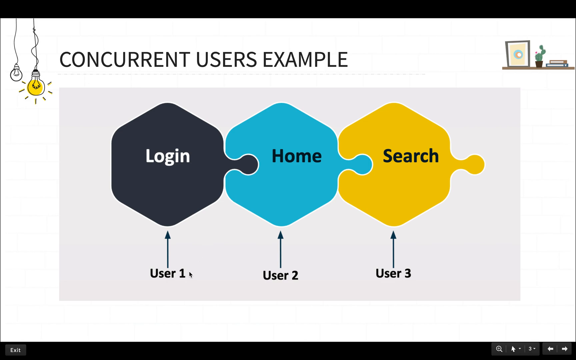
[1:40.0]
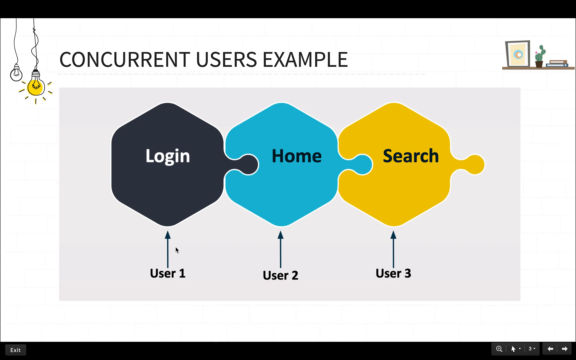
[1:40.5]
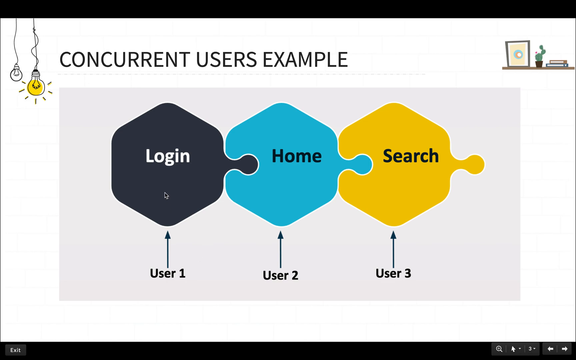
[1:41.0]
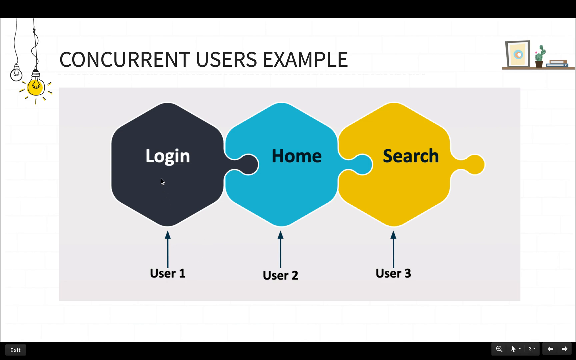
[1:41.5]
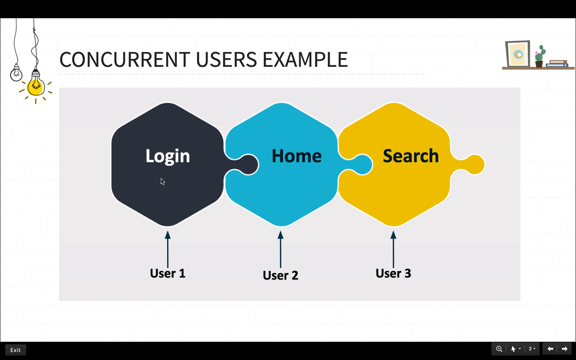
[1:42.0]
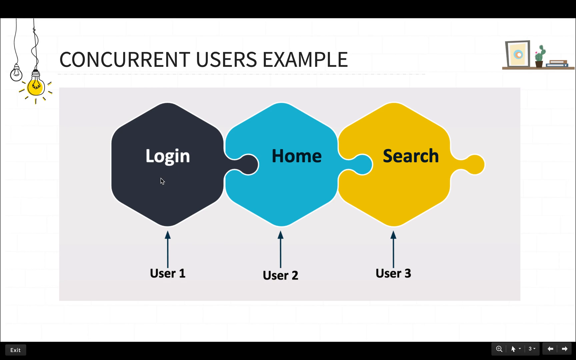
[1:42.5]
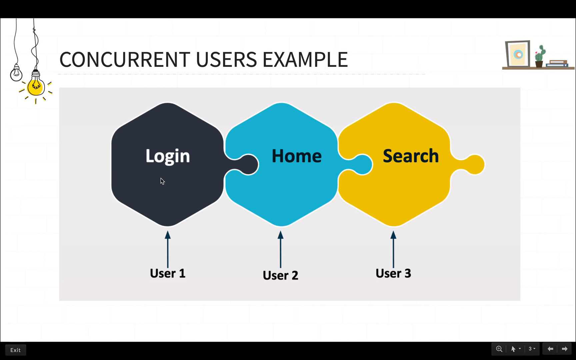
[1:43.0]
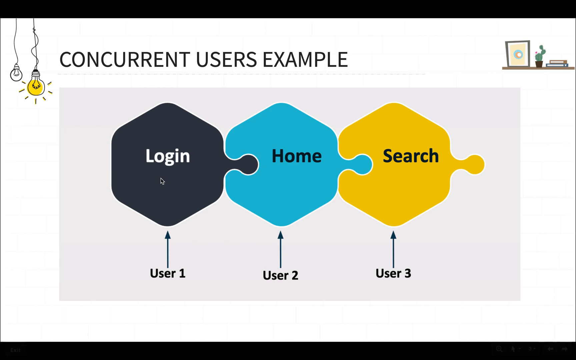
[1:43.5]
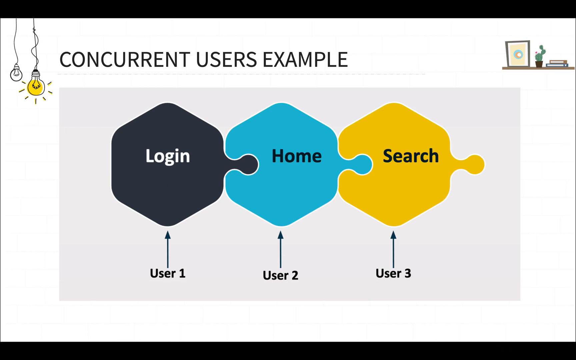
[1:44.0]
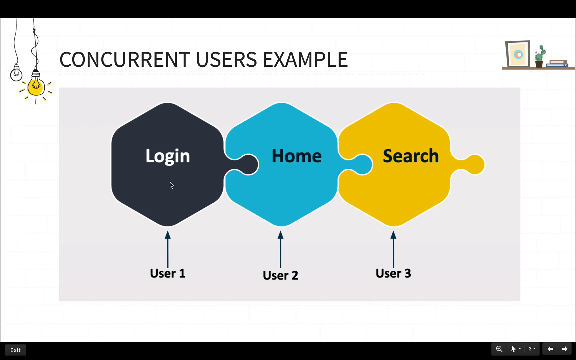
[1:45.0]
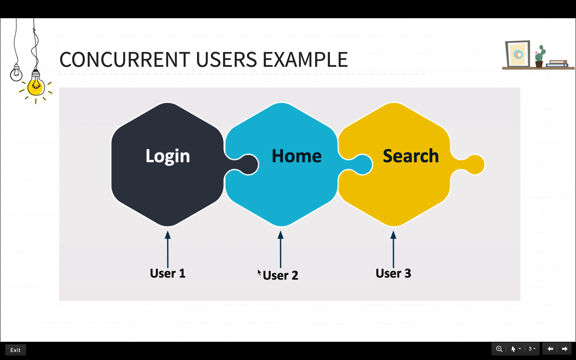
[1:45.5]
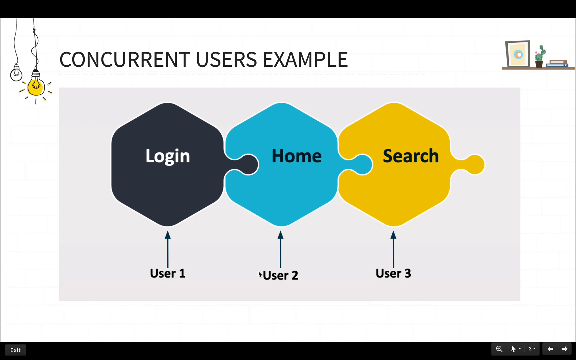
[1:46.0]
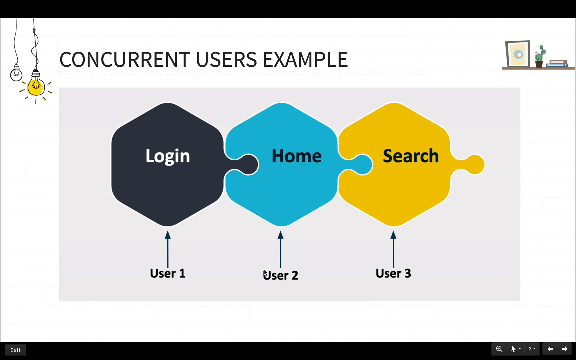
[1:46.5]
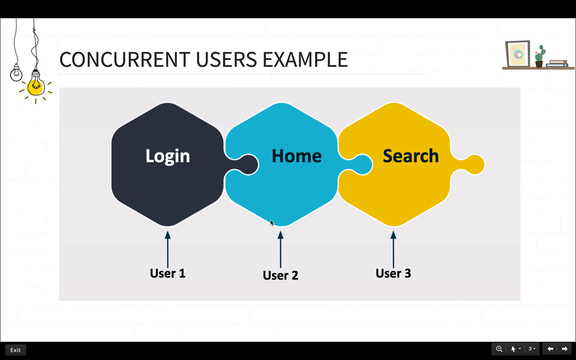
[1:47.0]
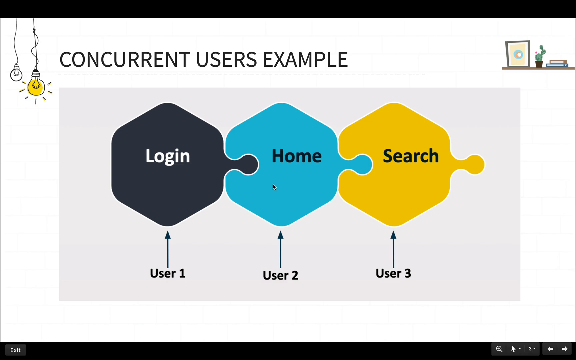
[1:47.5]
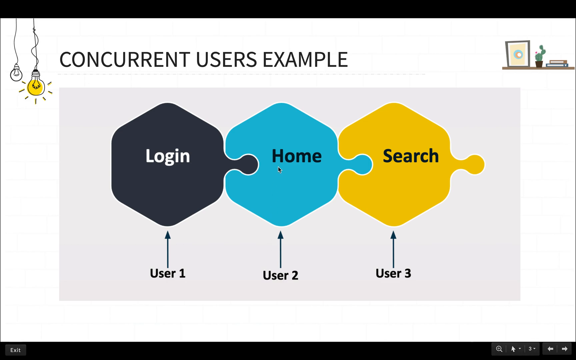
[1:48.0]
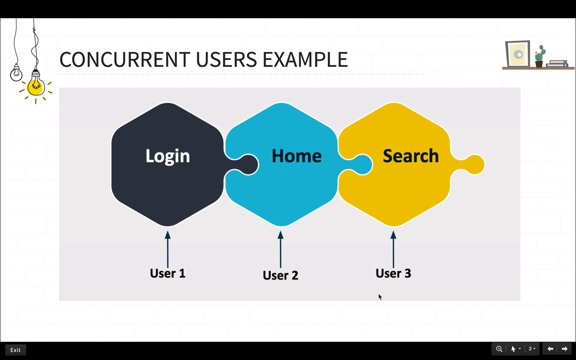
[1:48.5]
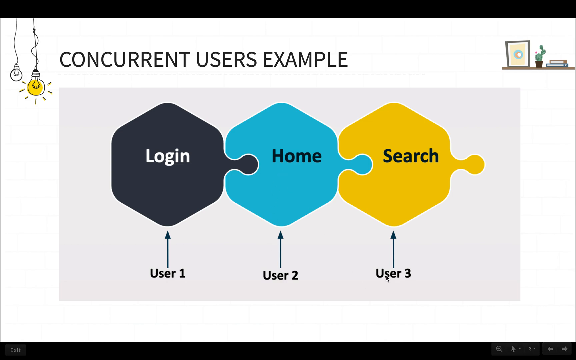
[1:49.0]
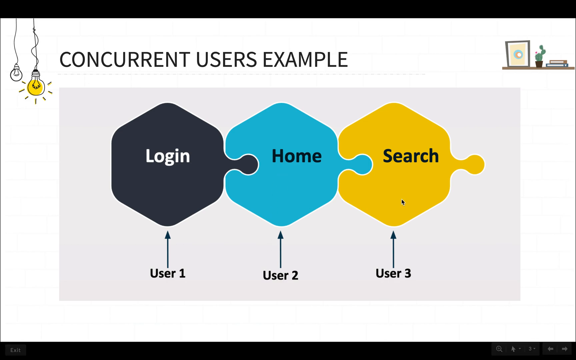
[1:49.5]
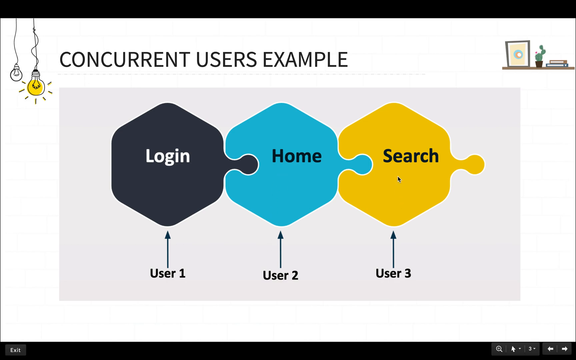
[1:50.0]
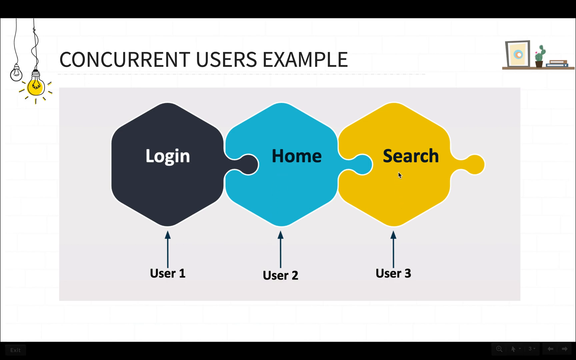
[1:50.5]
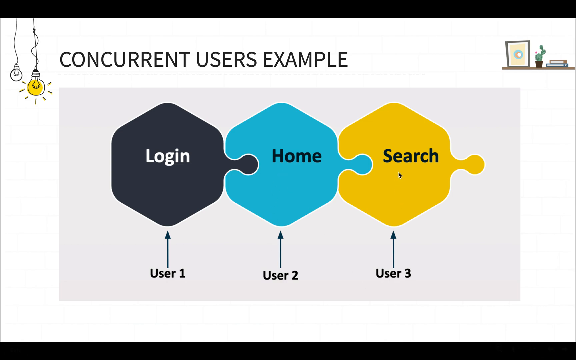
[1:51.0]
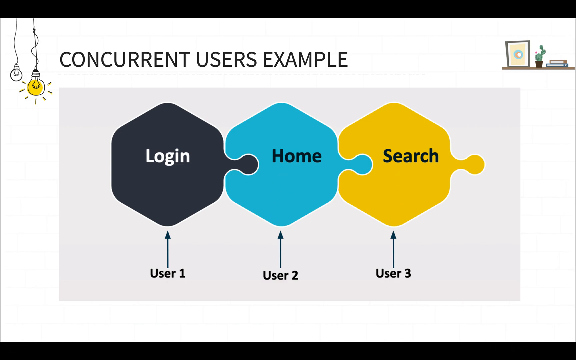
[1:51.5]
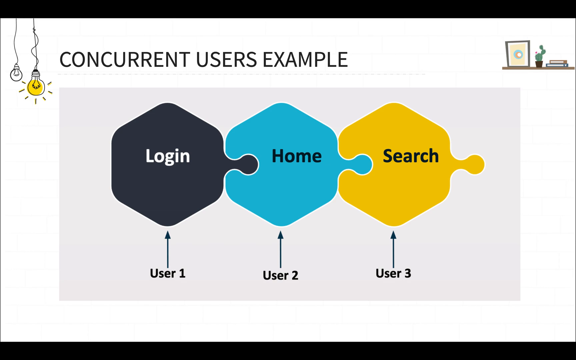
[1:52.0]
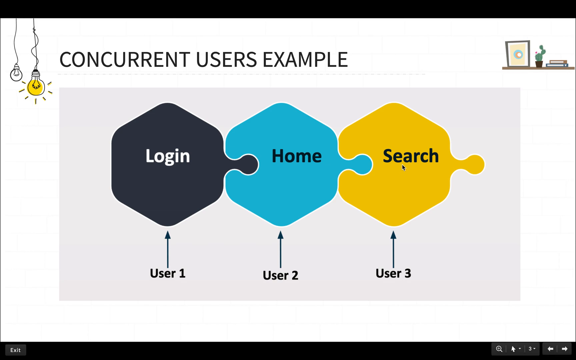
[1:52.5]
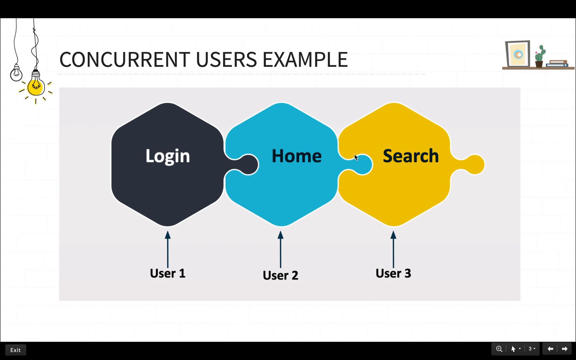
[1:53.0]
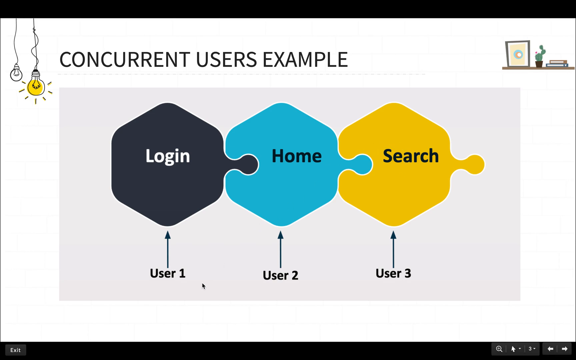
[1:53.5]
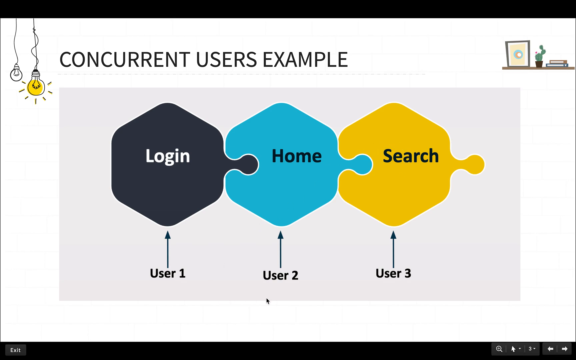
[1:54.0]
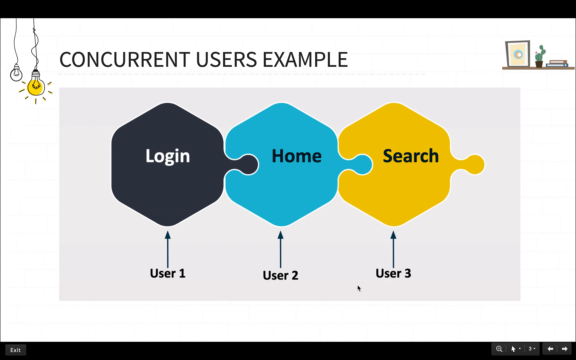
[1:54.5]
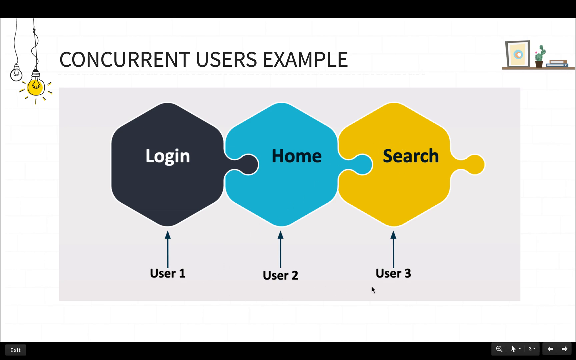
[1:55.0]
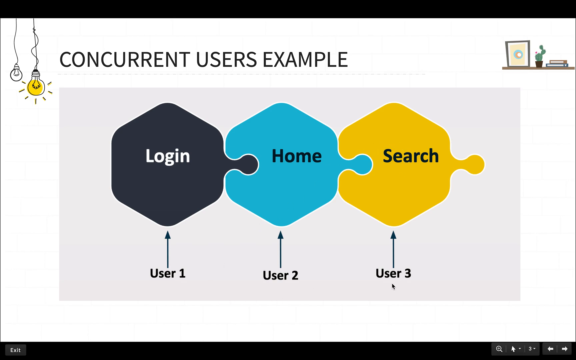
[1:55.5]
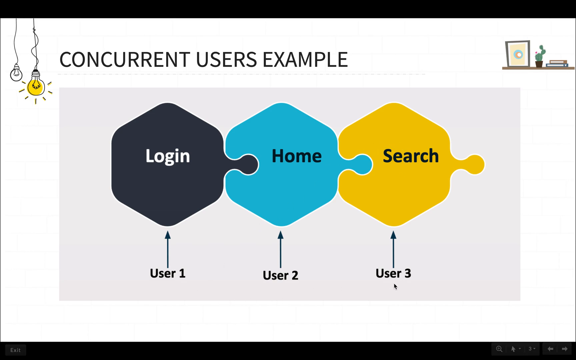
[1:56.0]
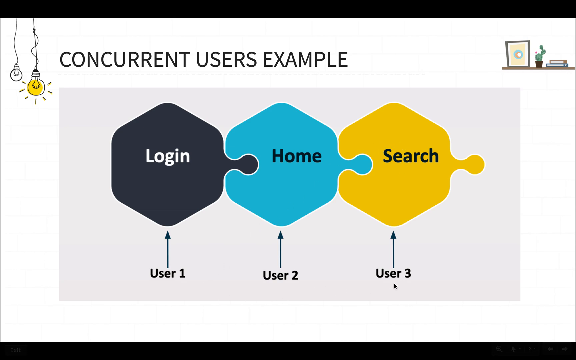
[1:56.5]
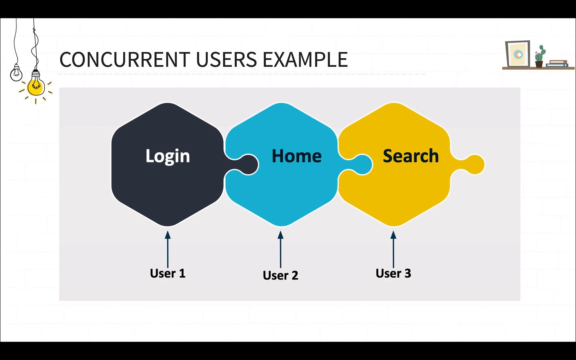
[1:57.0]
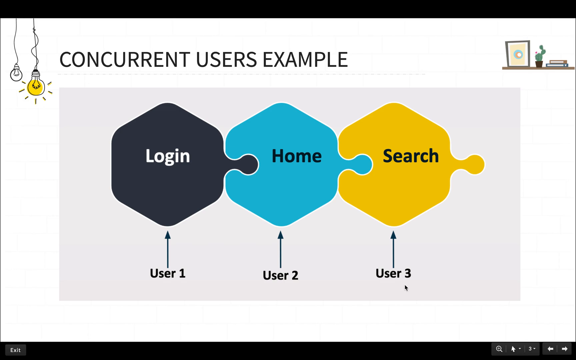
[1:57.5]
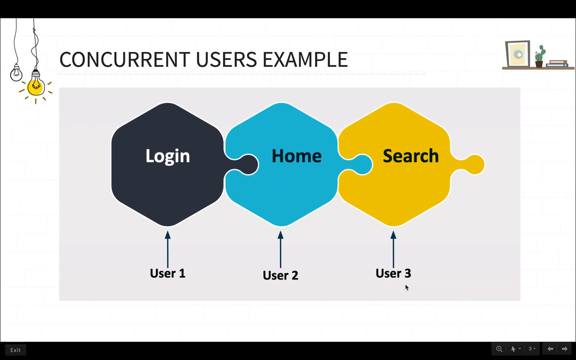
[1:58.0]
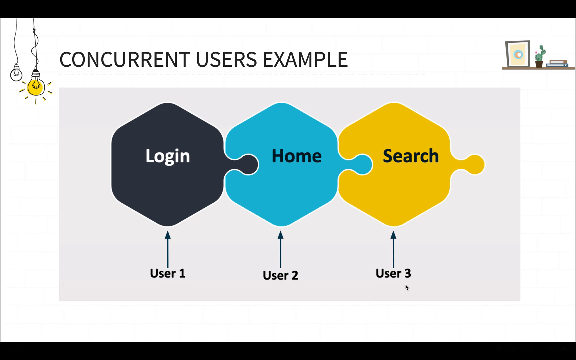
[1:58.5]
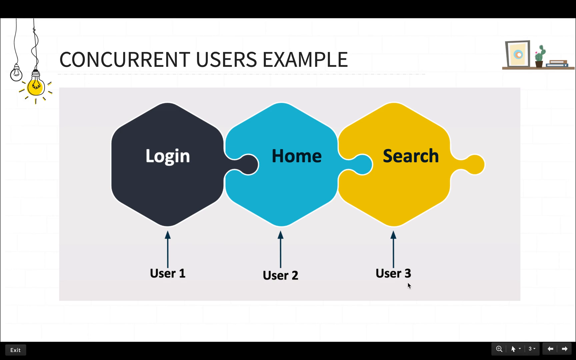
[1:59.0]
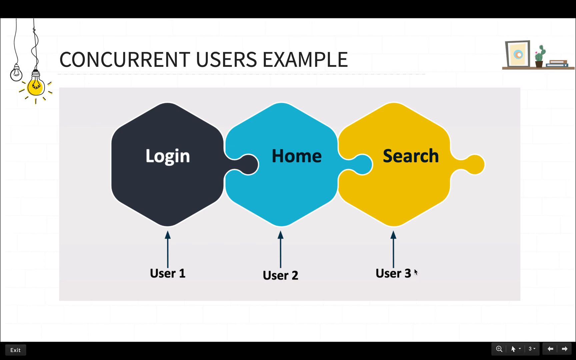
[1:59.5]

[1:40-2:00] A white slide with black borders, titled "concurrent users example" in black letters, shows puzzle pieces stuck together: user 1, "login"; user 2, "home"; user 3, "search." A cursor moves around, points at user 3 and goes around again; nothing else changes. Two light bulbs hang down in the top left corner: a smaller white one, and a larger one farther to the right that is bright yellow with rays coming out of it. In the top right area there is what looks like maybe a shelf on the wall with maybe a picture and a cactus plant, and a stack of two books next to that.